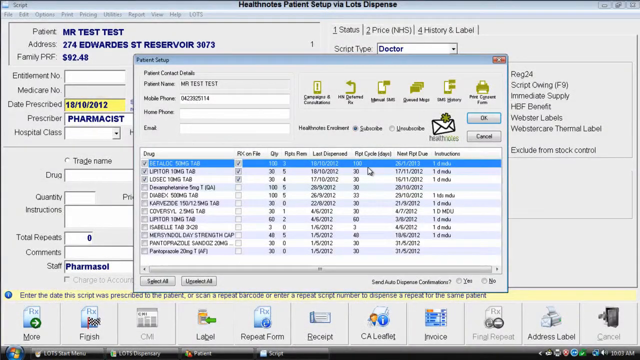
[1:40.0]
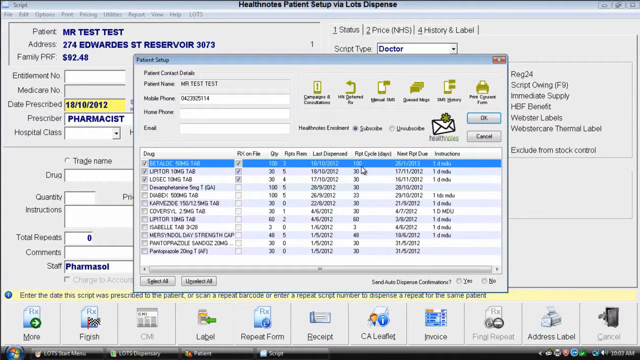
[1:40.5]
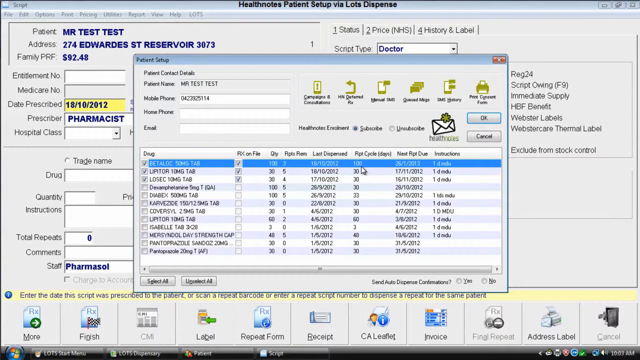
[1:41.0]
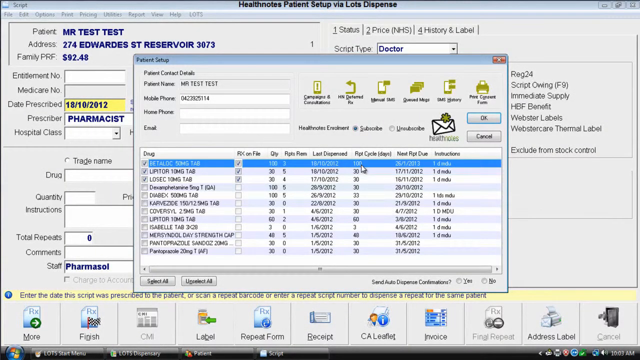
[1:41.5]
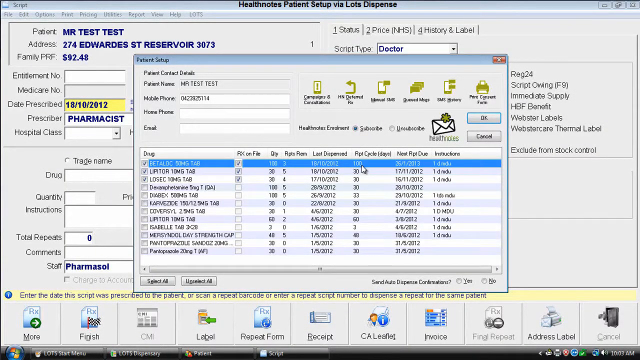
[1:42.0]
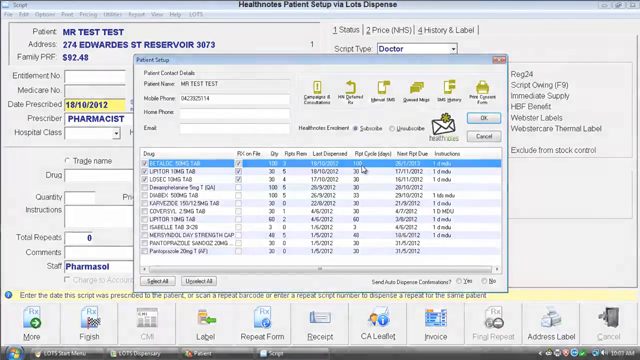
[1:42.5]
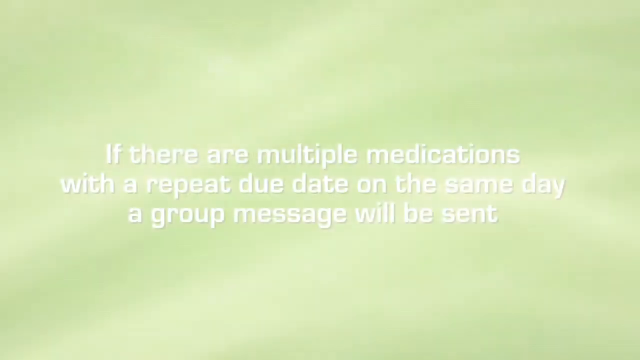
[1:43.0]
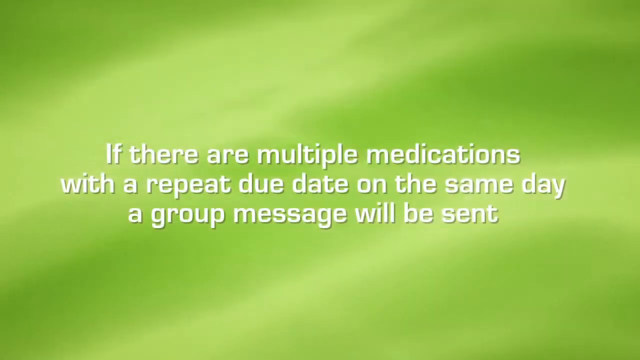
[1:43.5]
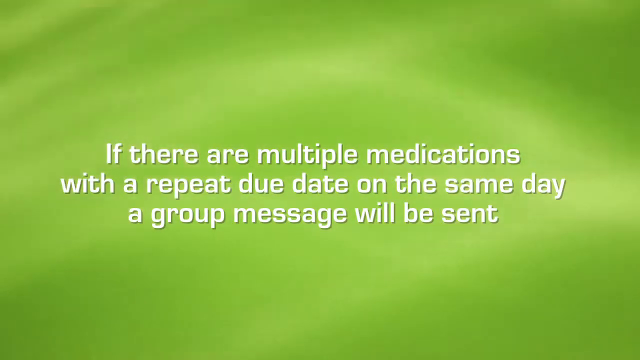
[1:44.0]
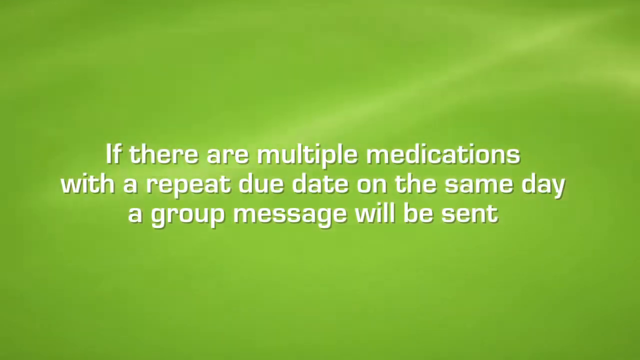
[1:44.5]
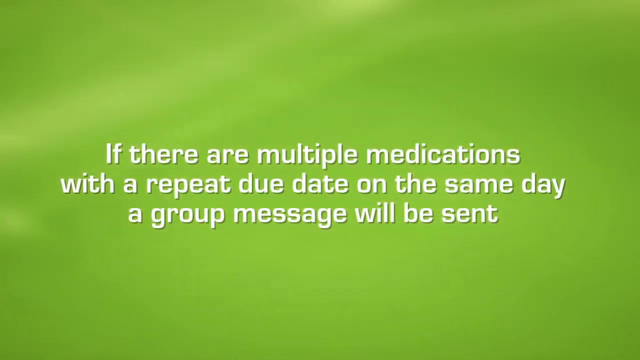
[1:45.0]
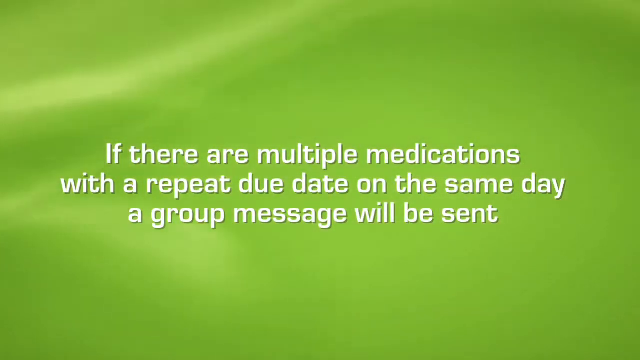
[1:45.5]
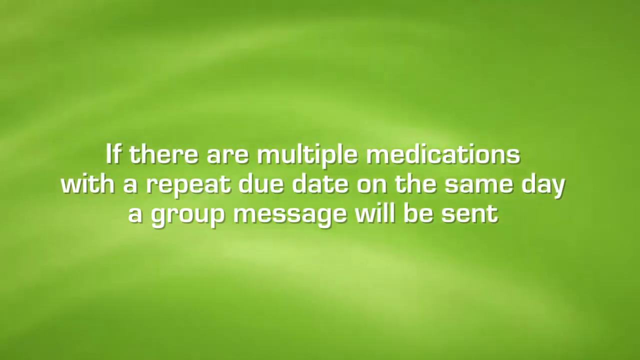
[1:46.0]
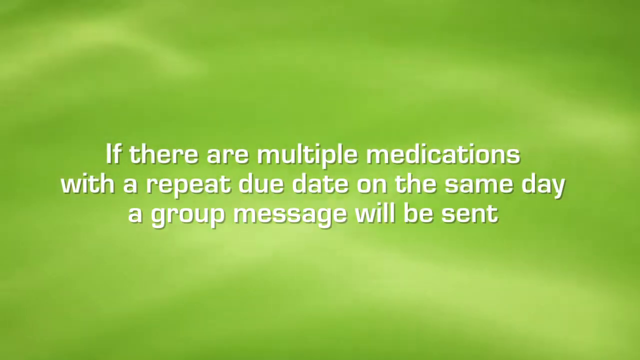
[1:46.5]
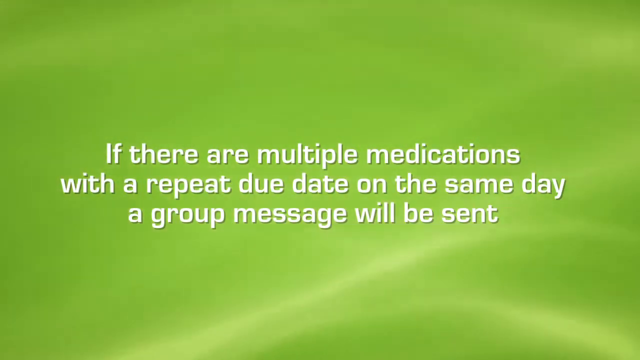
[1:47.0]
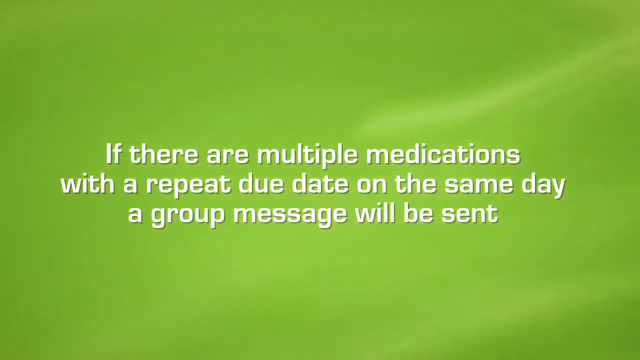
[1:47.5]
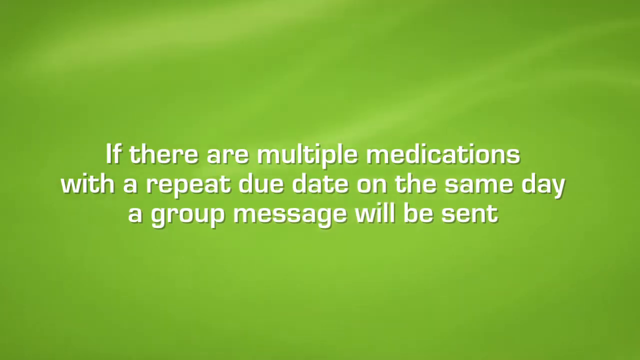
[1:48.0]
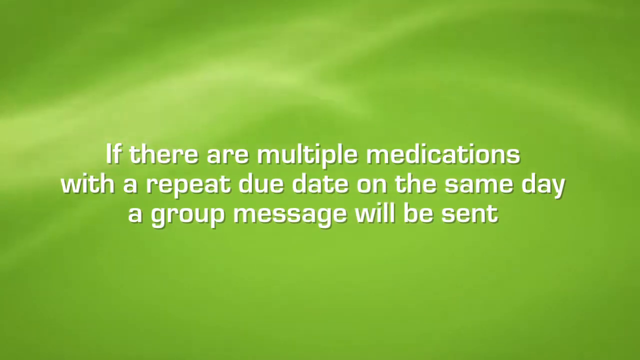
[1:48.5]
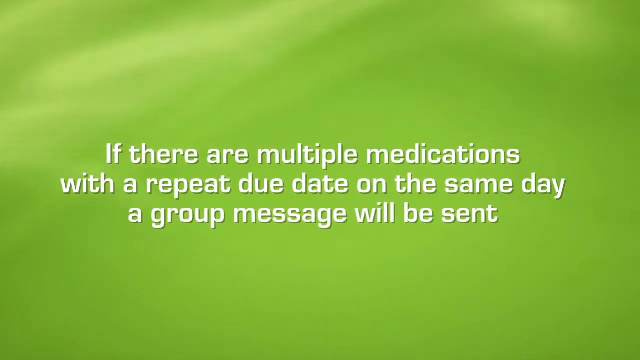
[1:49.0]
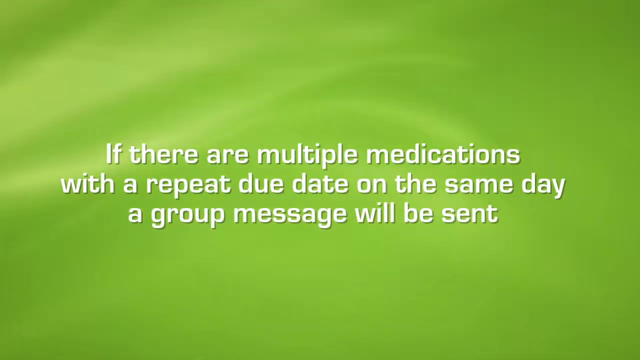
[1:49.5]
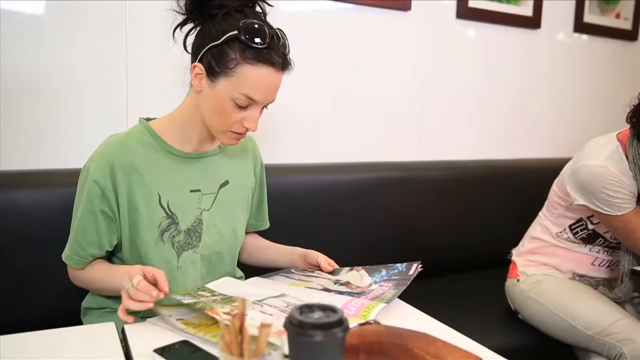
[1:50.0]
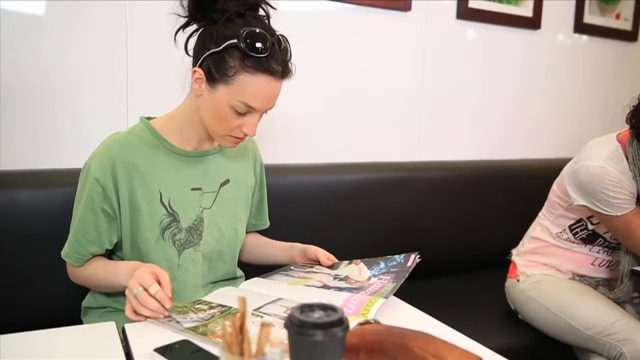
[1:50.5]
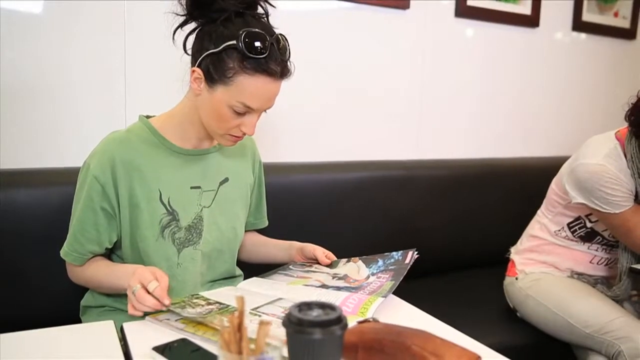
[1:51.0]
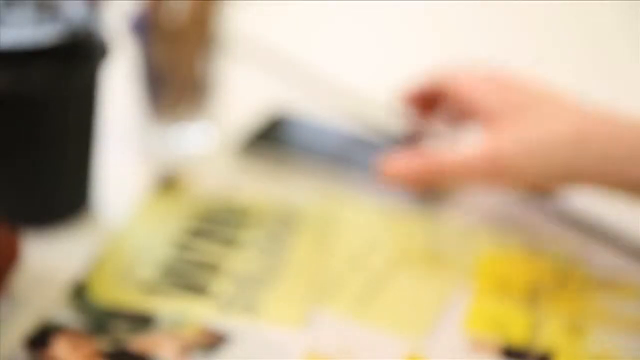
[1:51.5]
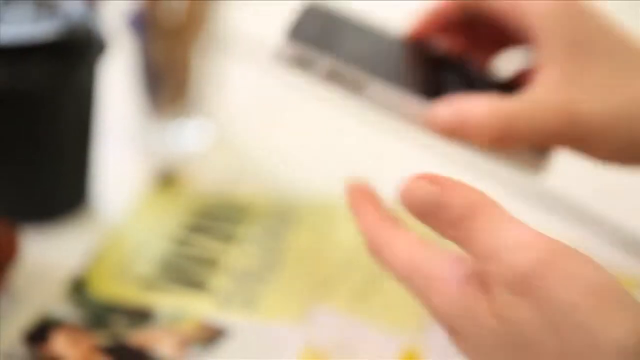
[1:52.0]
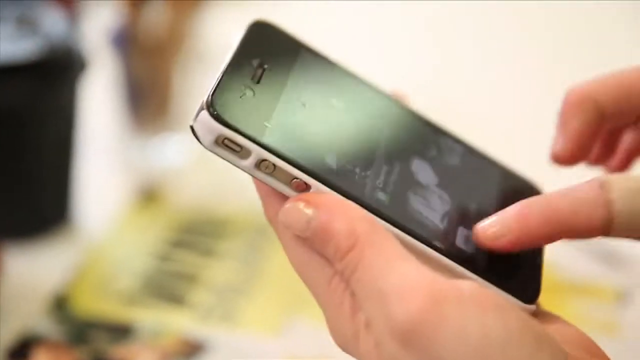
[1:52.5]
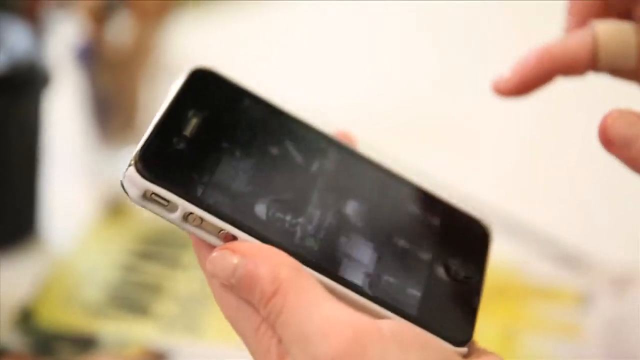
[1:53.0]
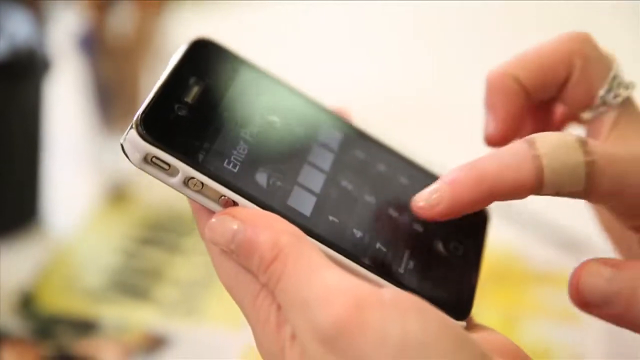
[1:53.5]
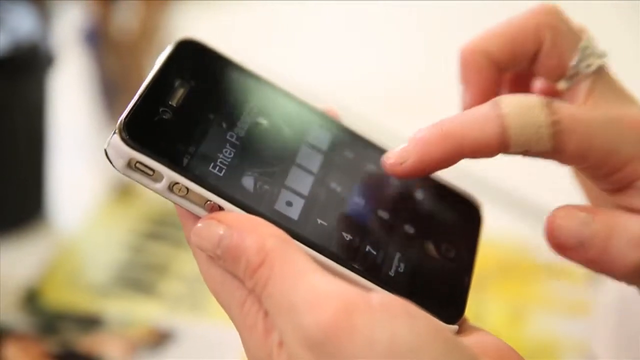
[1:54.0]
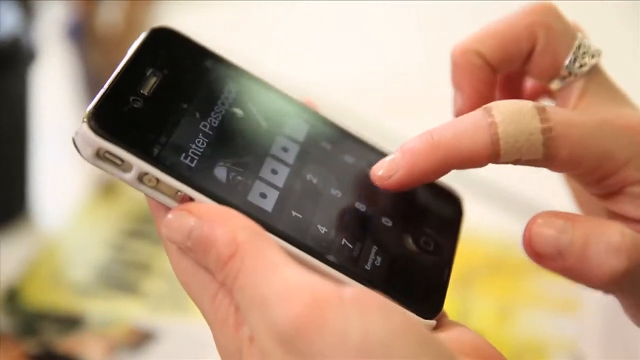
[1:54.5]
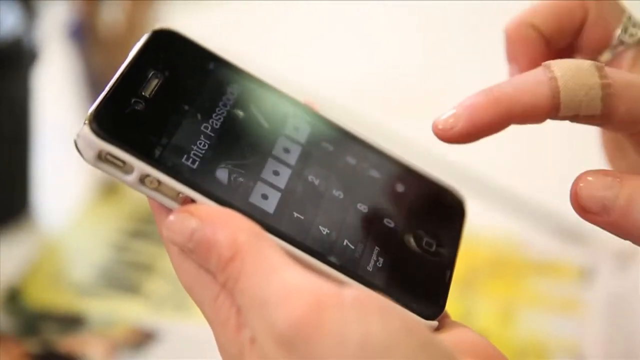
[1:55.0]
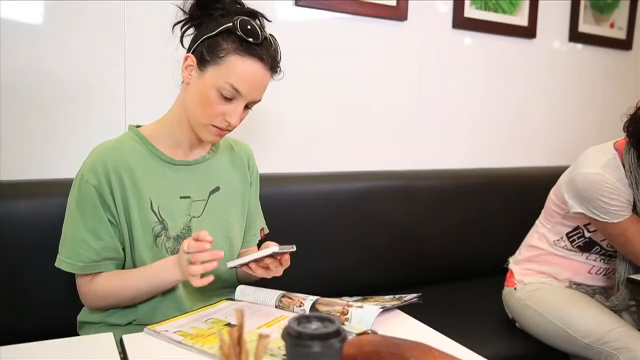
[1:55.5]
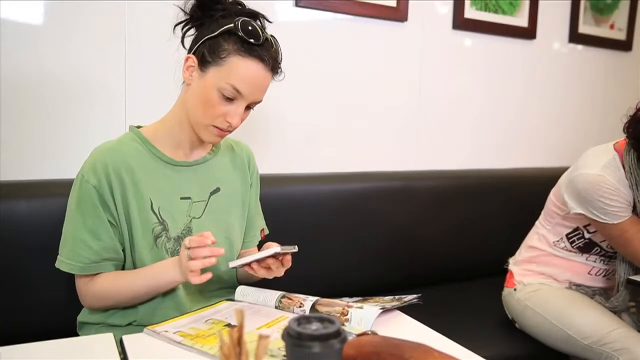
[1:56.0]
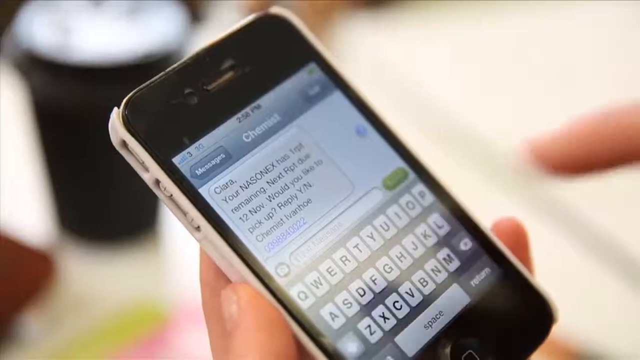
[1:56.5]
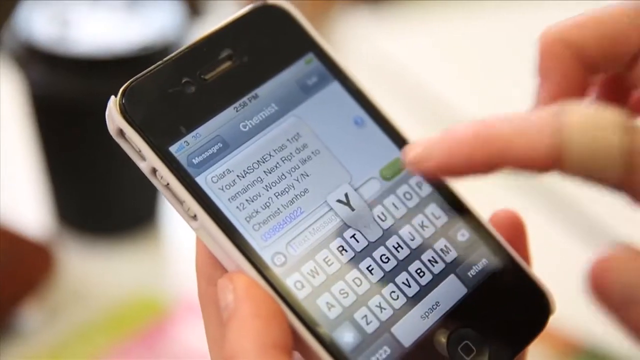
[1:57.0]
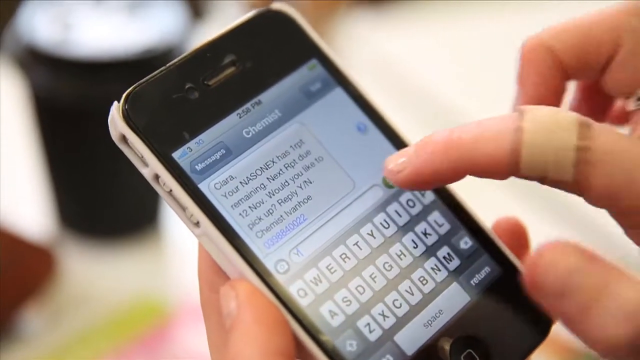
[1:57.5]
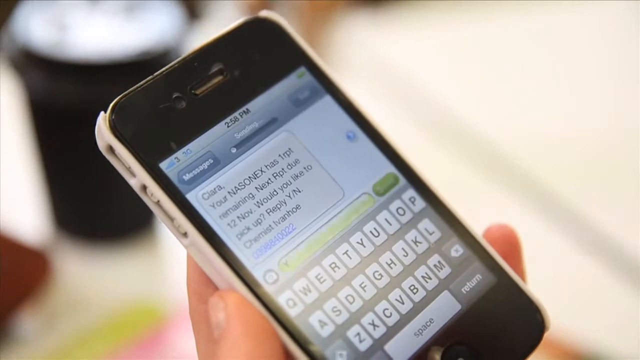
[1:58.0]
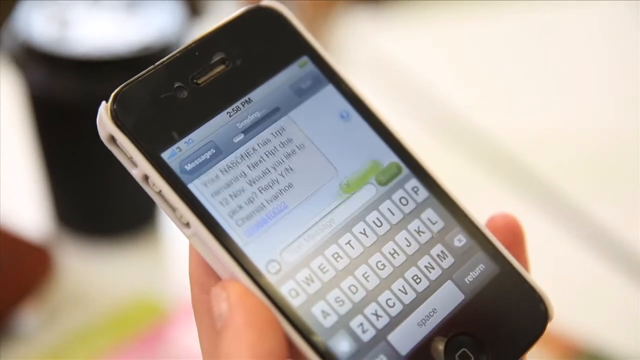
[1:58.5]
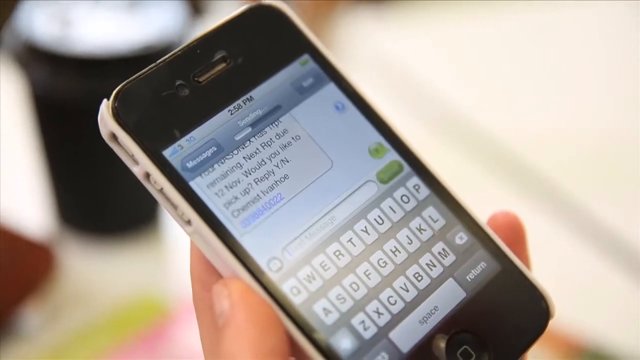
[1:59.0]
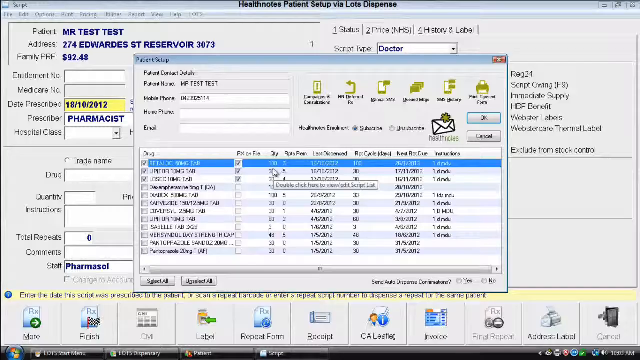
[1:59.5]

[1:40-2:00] The screen changes from the patient setup window to a green background, and a message pops up that says "if there are multiple medications with a repeat due date on the same day, a group message will be sent." The scene changes again to a woman who appears to be in a waiting room or maybe a cafe, seemingly looking at a magazine. She picks up her phone, unlocks it and opens her messages, where there is a conversation with a contact named "Chemist." She seems to have just received a message saying her Nasonex has one repeat cycle remaining, next repeat due November 12th, asking whether she would like to pick up and to reply yes or no; it is signed "Chemist Ivanhoe" with a reference number. She types Y for yes and sends it, apparently confirming that she wants to pick up her next prescription.